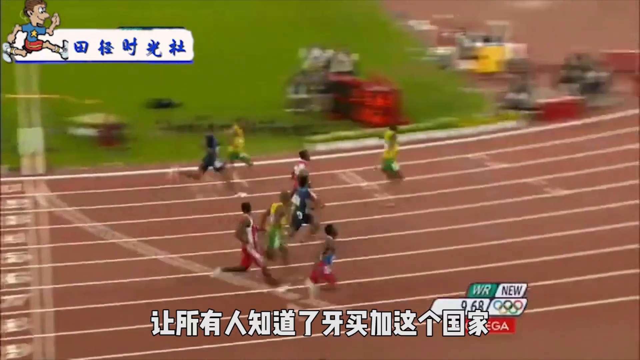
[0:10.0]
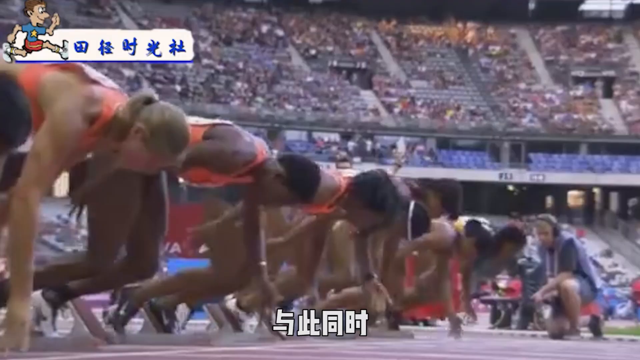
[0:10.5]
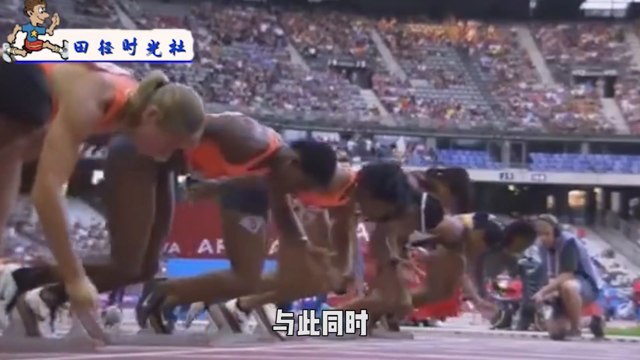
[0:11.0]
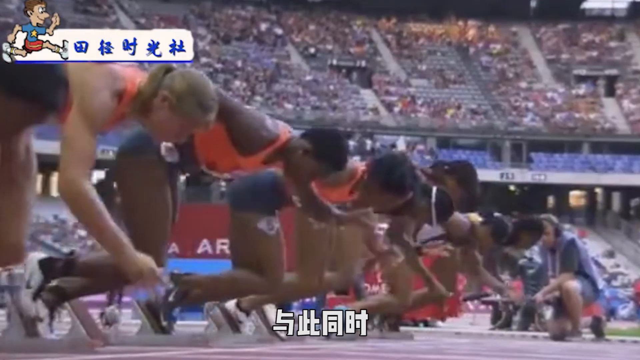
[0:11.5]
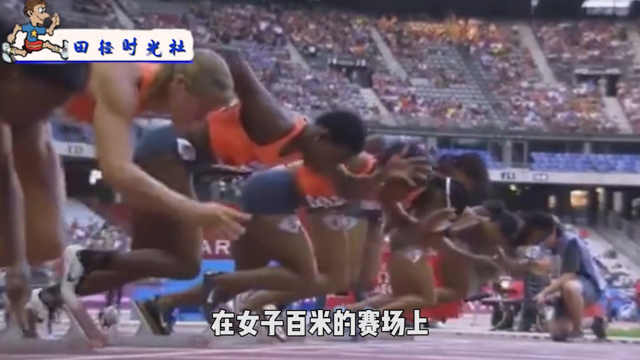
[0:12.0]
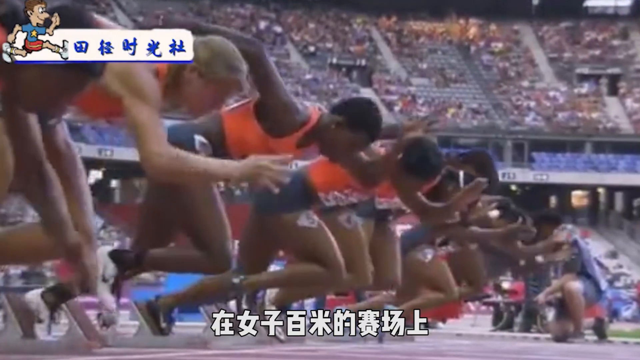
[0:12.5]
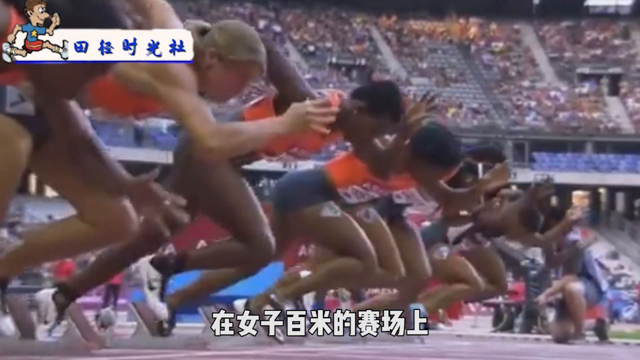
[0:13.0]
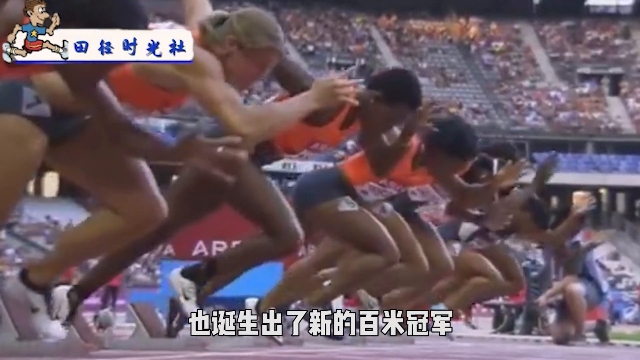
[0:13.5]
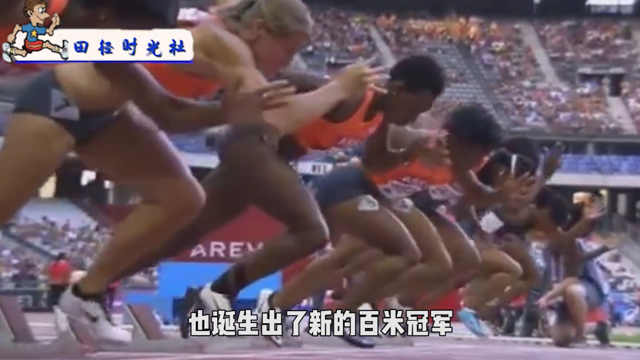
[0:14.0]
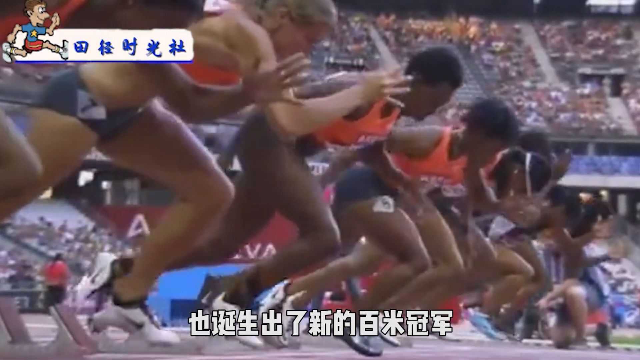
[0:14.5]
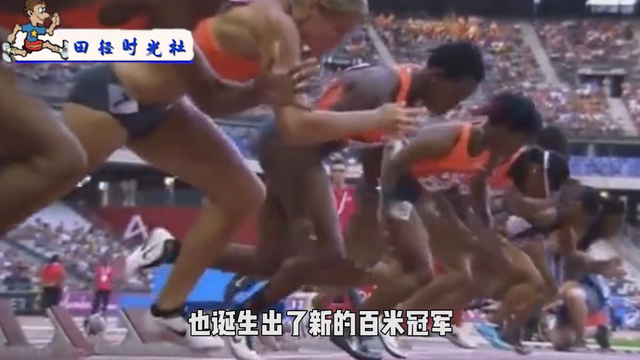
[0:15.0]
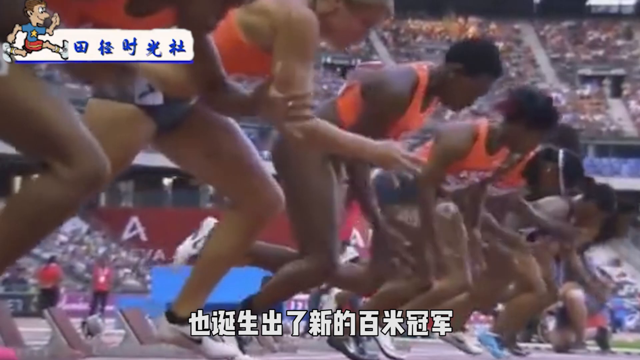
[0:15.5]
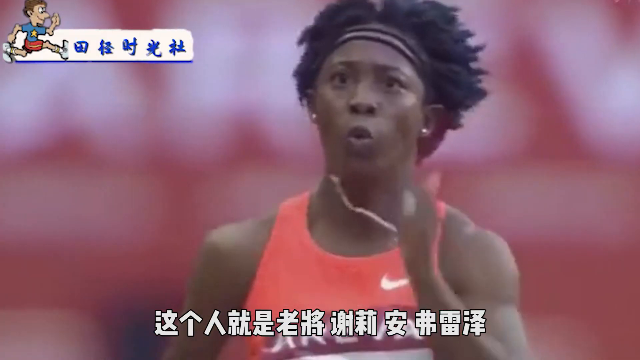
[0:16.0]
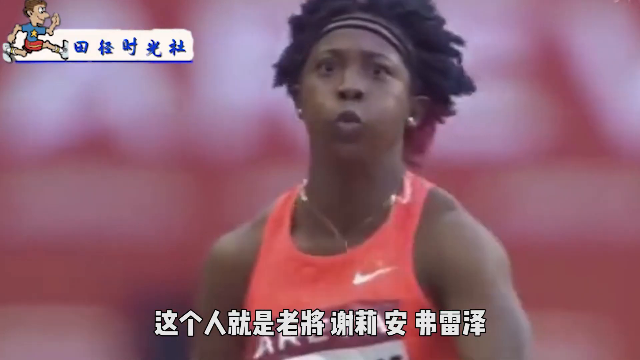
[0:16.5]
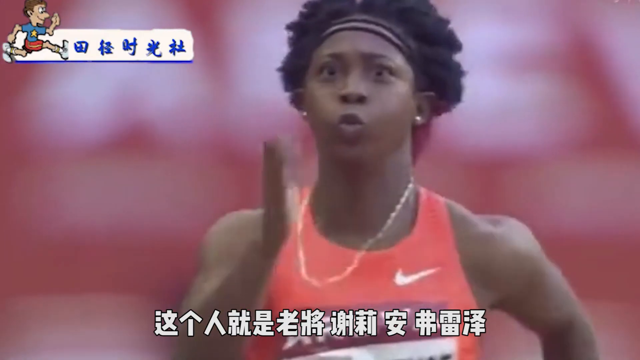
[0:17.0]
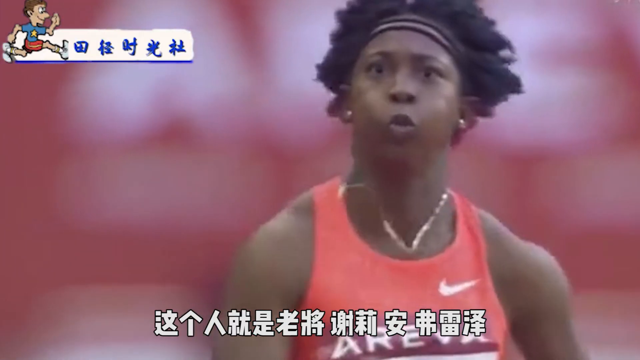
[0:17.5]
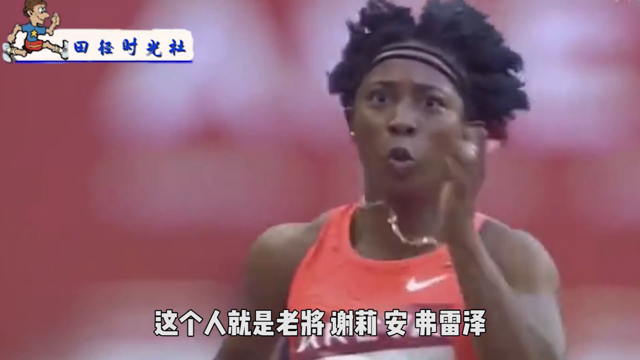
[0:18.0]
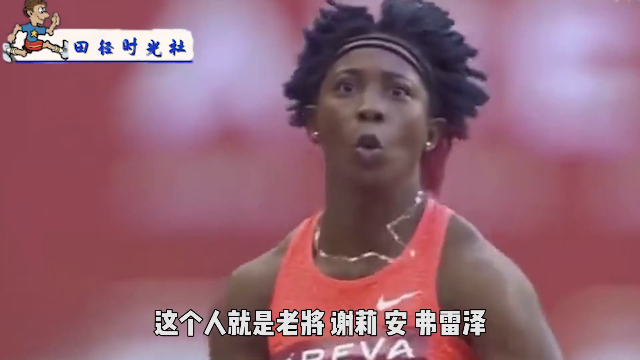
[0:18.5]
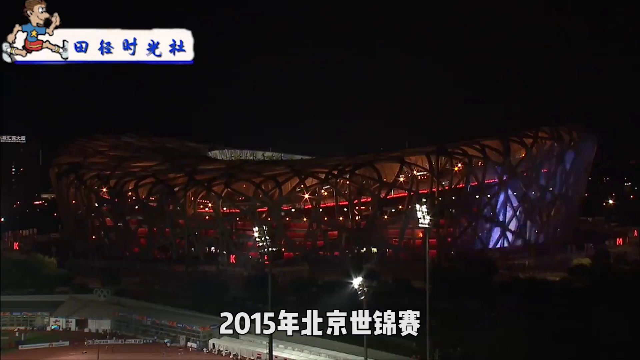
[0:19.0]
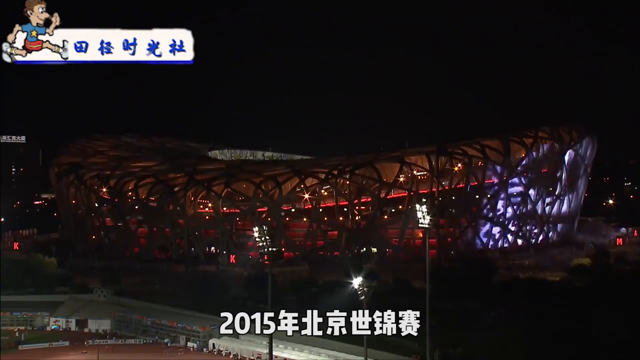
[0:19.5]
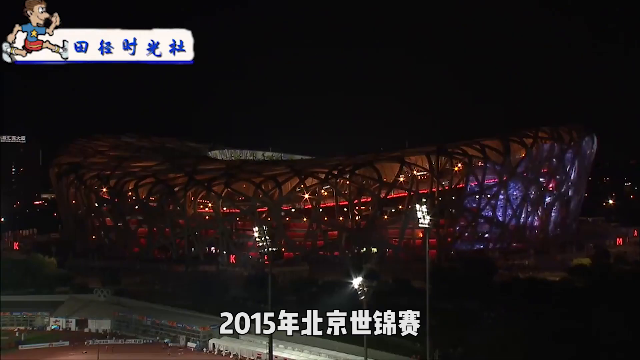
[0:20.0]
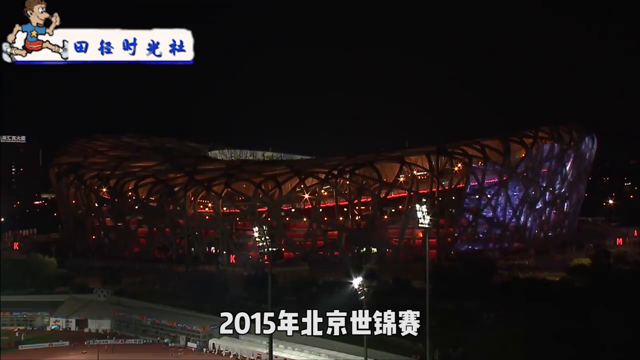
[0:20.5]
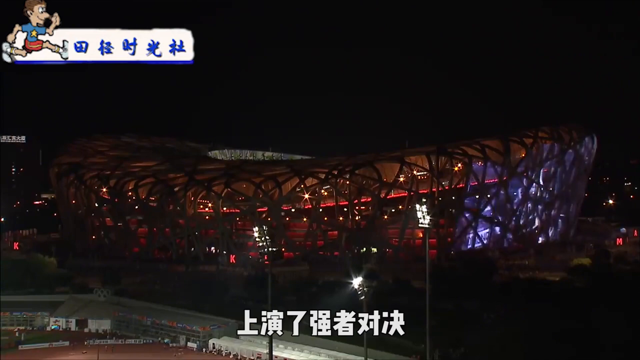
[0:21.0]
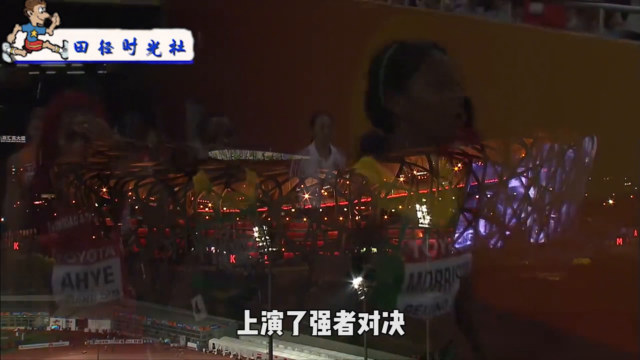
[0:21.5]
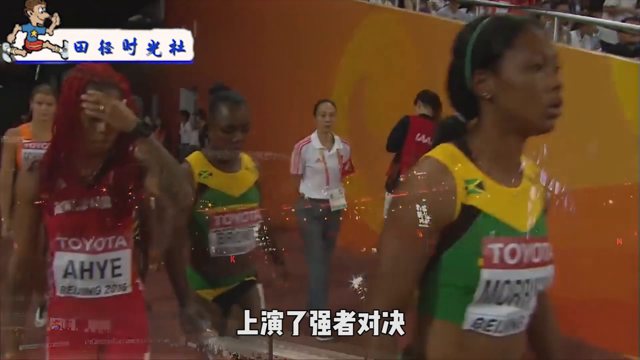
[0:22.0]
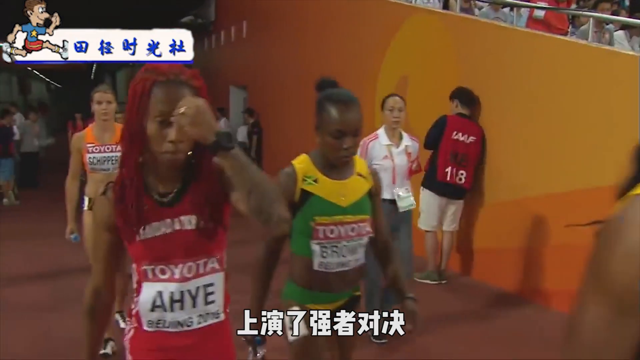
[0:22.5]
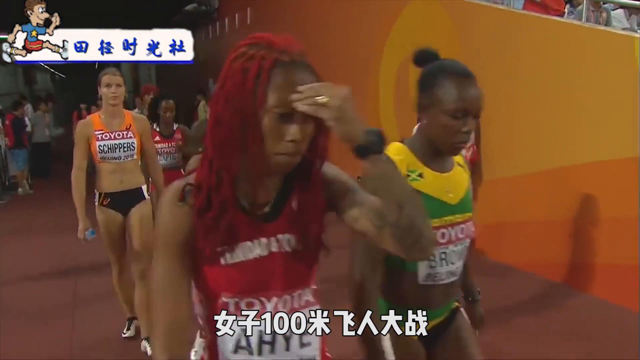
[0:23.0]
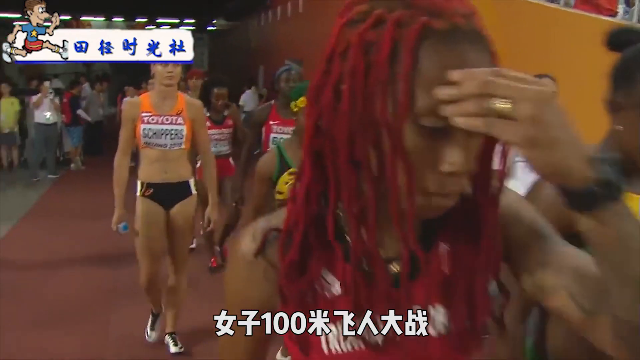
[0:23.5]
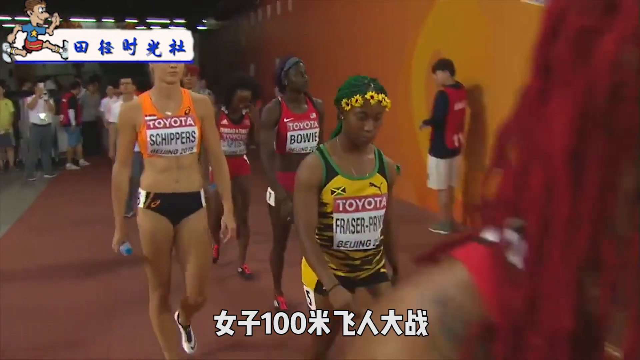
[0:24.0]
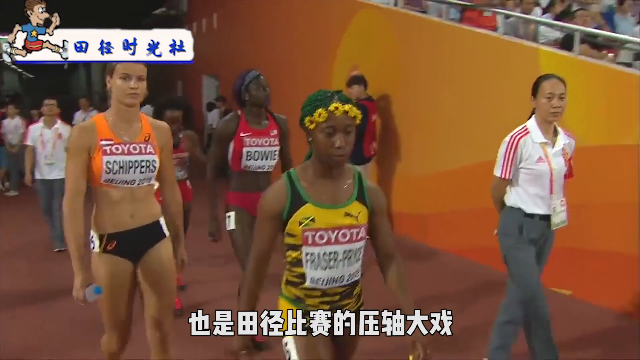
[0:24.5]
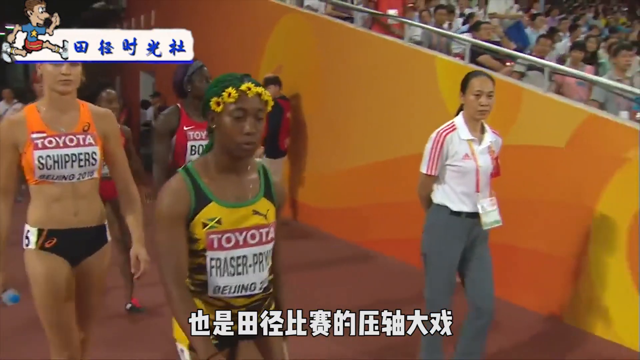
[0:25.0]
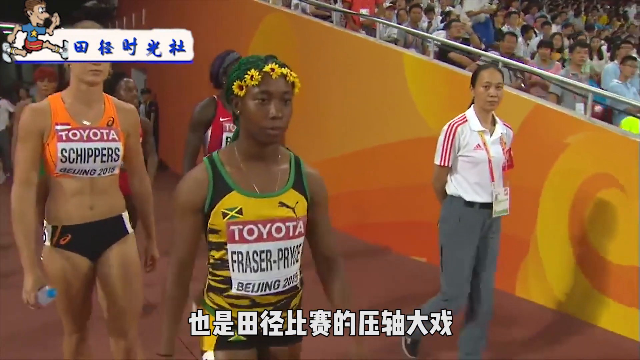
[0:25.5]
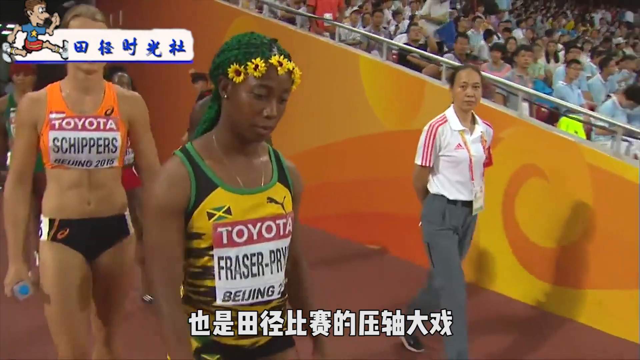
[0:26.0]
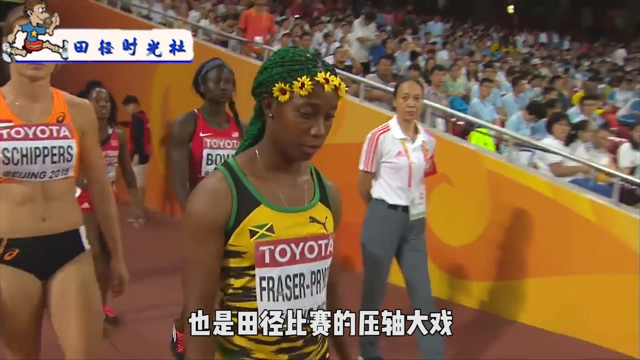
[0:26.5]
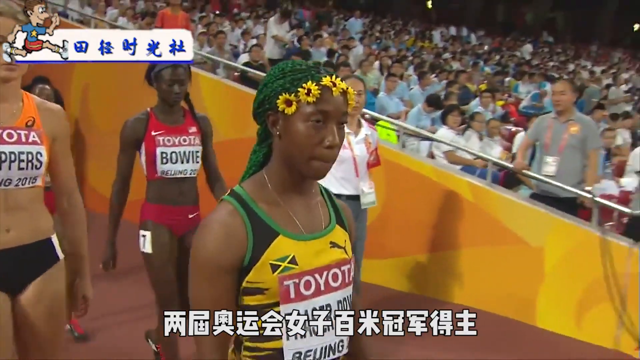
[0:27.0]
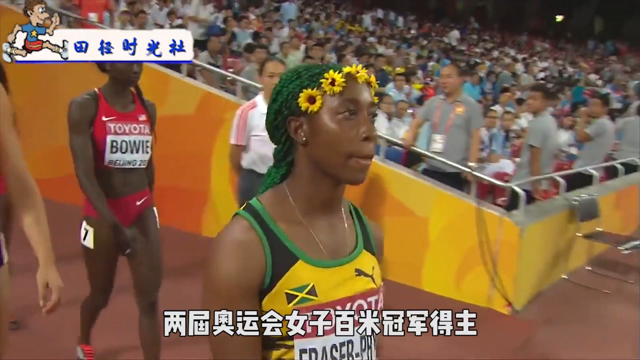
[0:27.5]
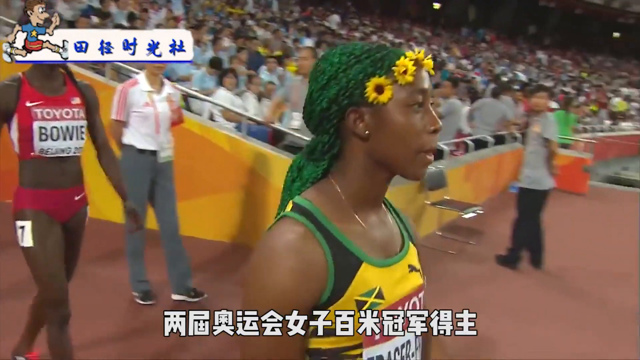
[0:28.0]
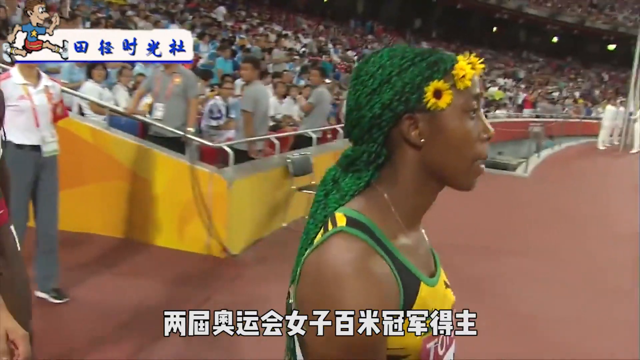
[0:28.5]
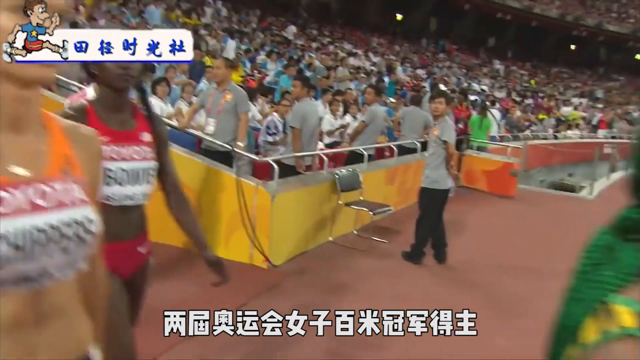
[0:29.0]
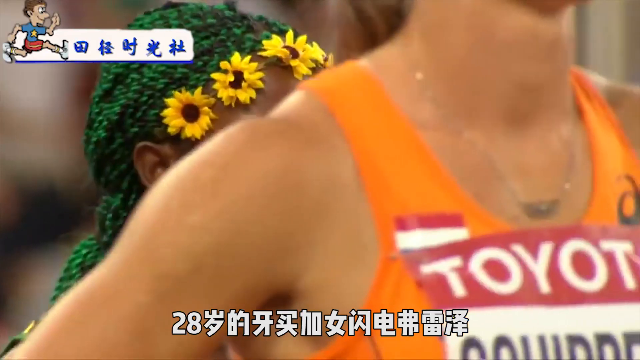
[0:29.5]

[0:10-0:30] The finish of the race is shown. Then another race begins, with the contestants lined up and exploding out of the starting blocks. Further down the race, the camera focuses on one man in a close-up of his face, his arms pumping up and down as he runs. Next comes what is apparently the stadium called the Bird's Nest, suggesting the Olympics held in China. The stadium is oval in shape with some curves to it; it is an outdoor stadium where track is run.